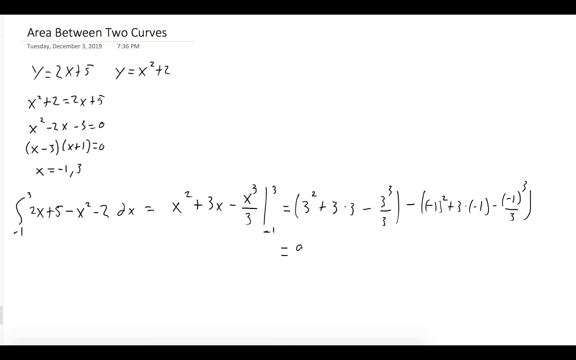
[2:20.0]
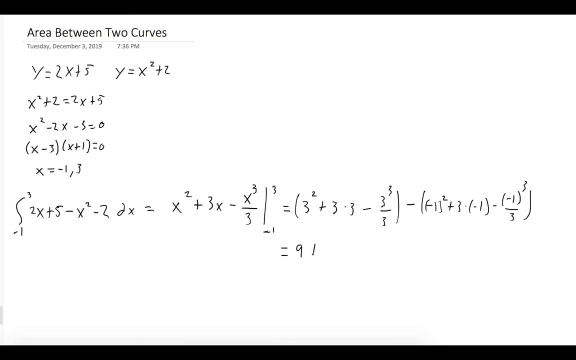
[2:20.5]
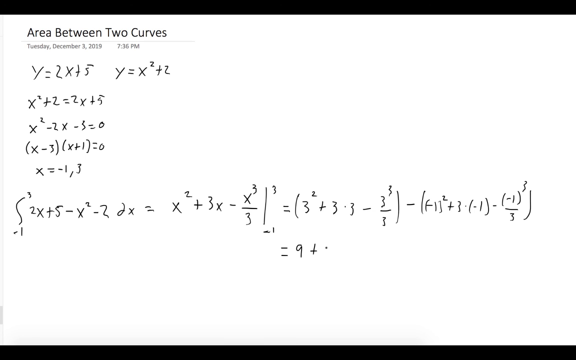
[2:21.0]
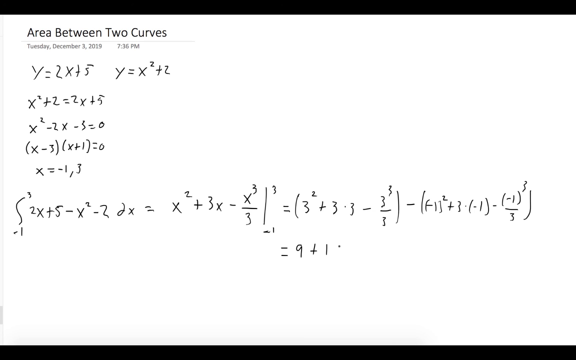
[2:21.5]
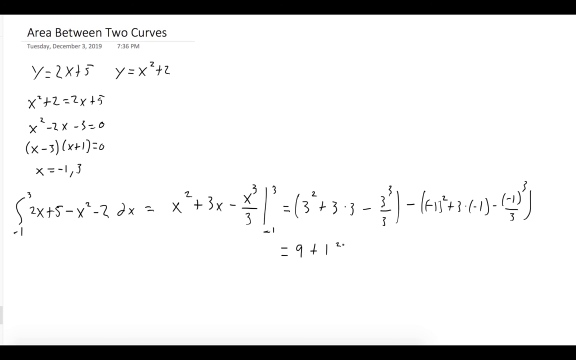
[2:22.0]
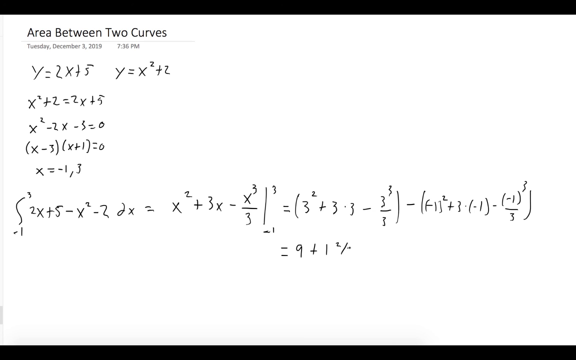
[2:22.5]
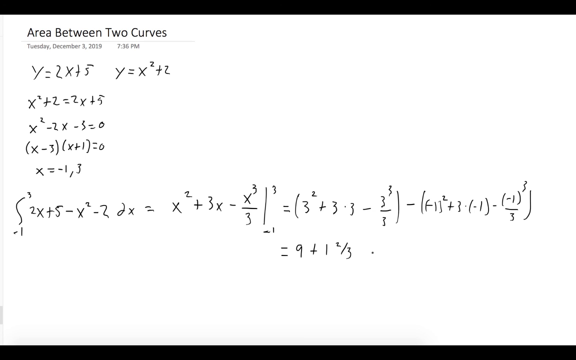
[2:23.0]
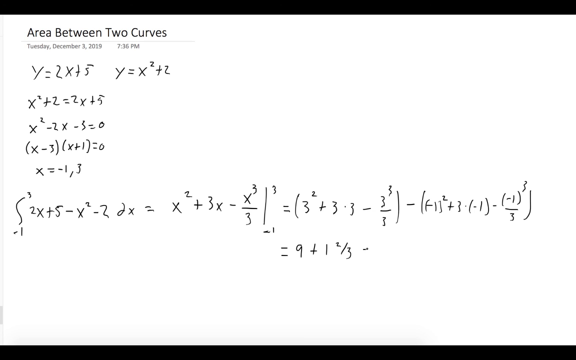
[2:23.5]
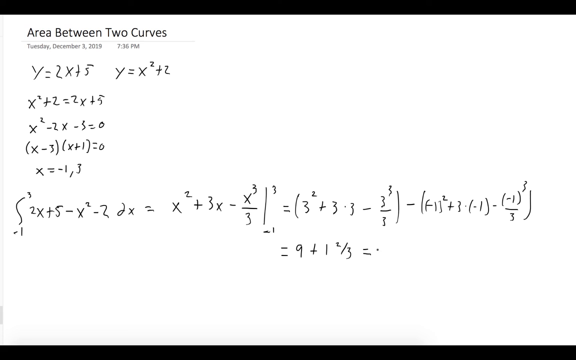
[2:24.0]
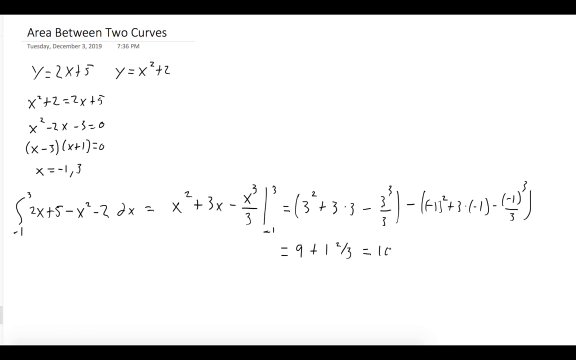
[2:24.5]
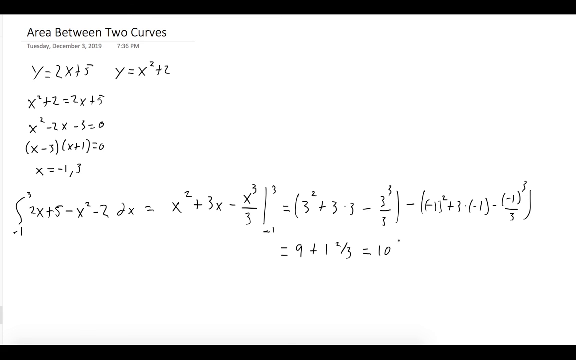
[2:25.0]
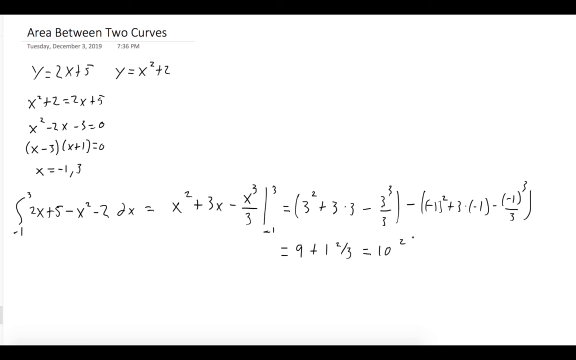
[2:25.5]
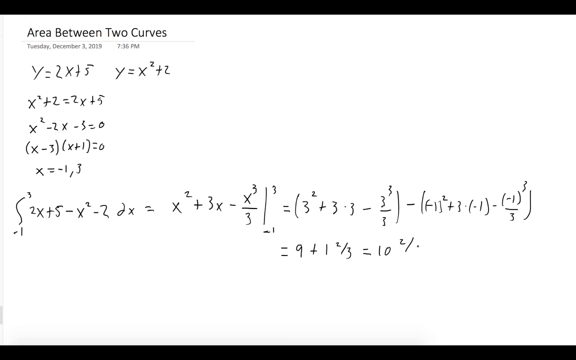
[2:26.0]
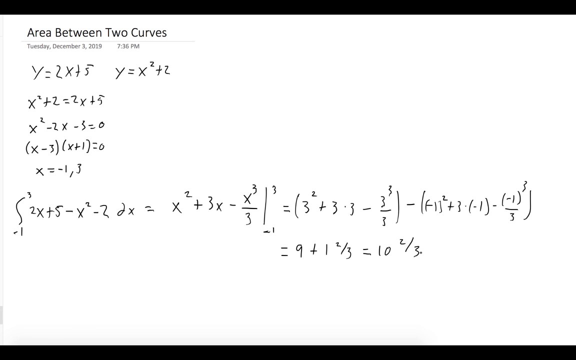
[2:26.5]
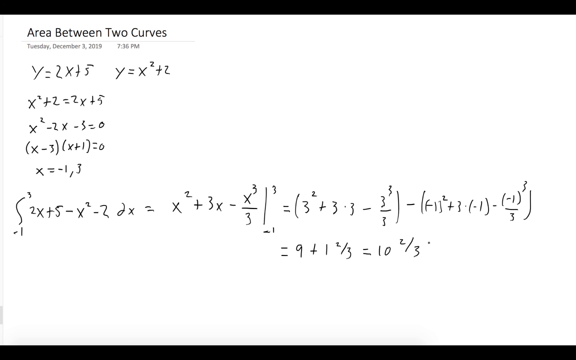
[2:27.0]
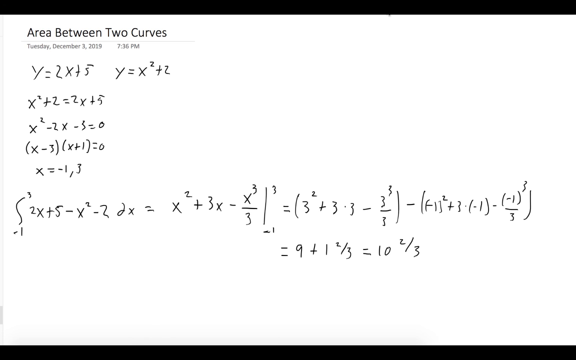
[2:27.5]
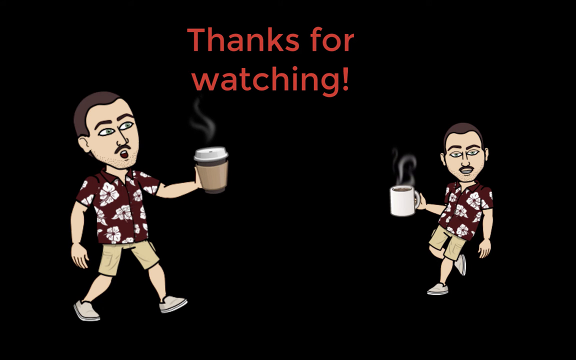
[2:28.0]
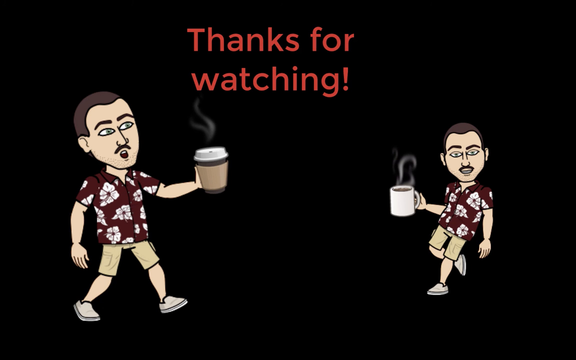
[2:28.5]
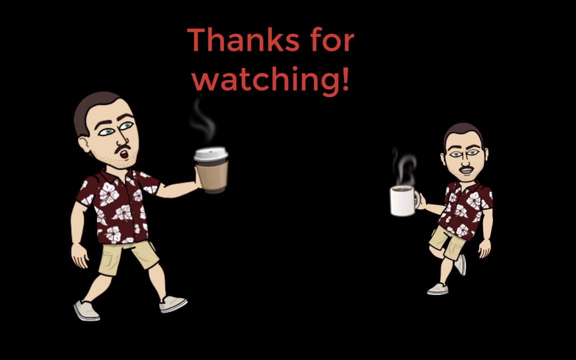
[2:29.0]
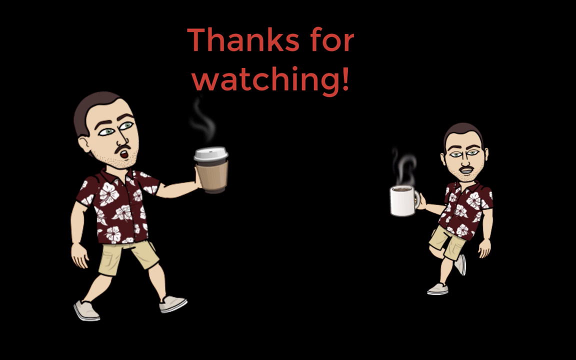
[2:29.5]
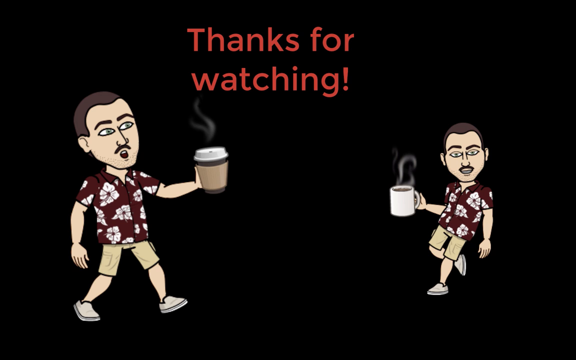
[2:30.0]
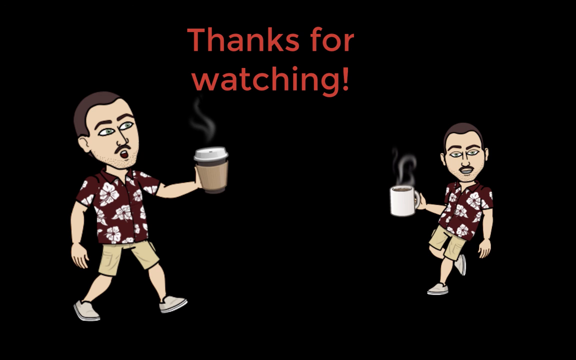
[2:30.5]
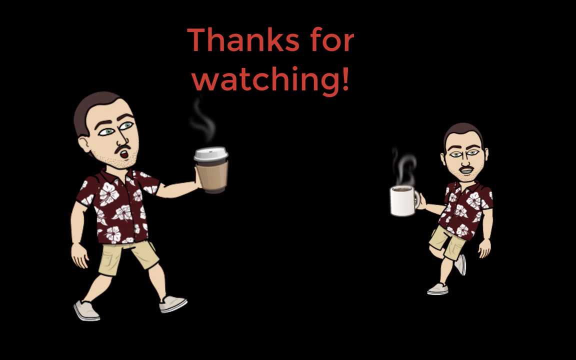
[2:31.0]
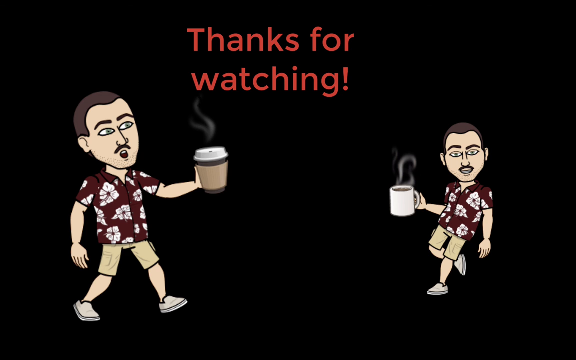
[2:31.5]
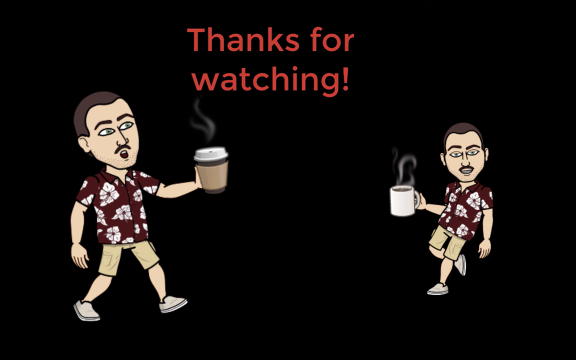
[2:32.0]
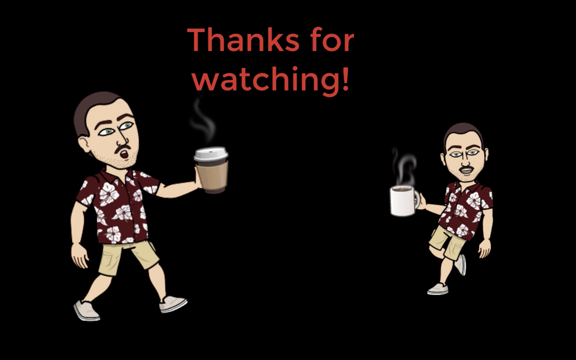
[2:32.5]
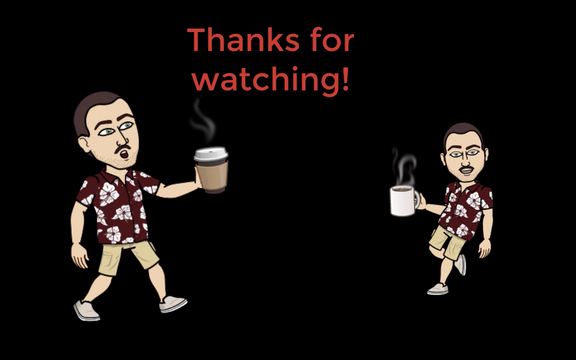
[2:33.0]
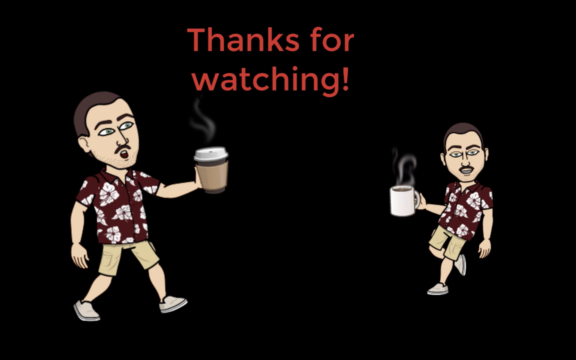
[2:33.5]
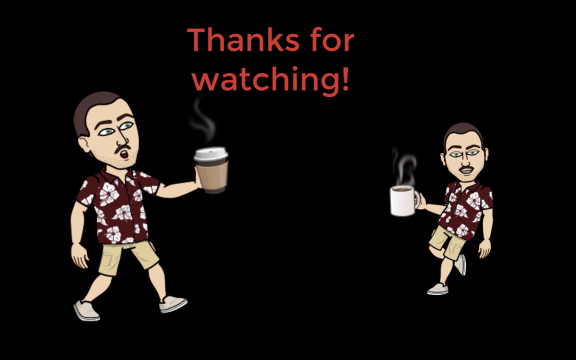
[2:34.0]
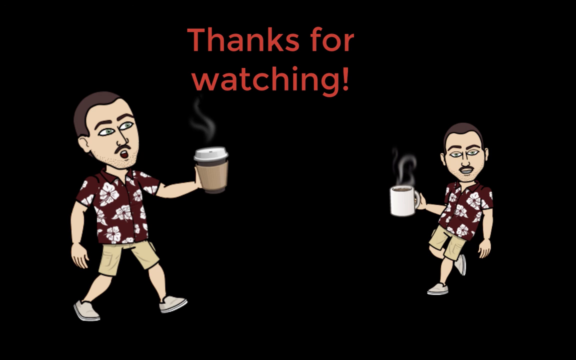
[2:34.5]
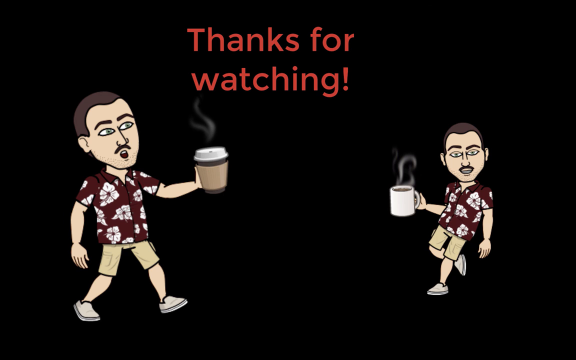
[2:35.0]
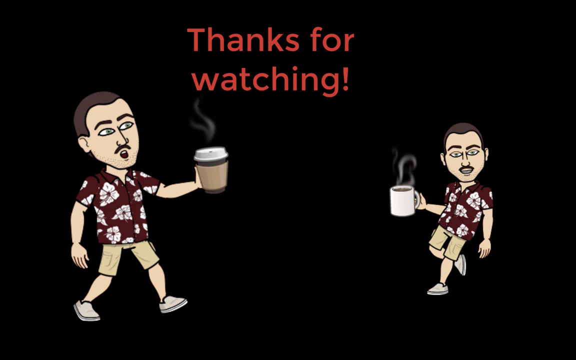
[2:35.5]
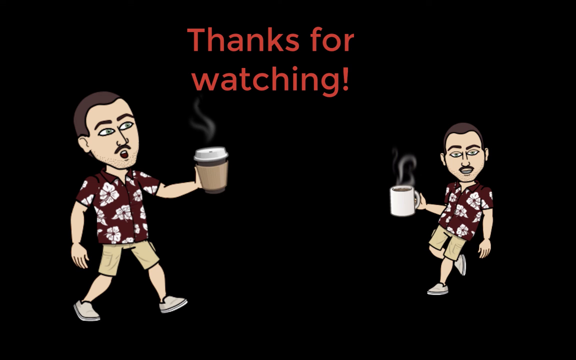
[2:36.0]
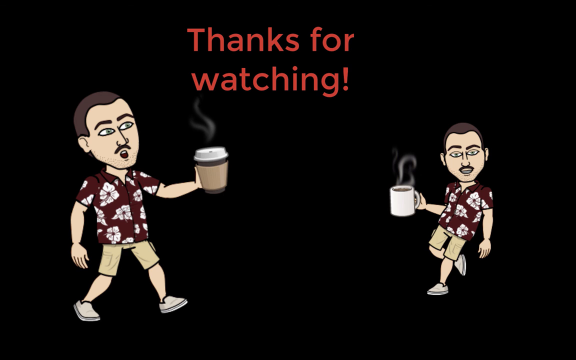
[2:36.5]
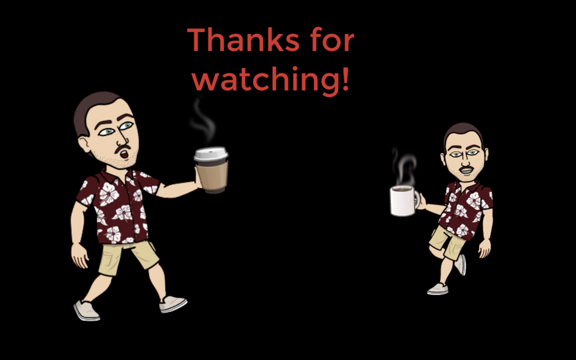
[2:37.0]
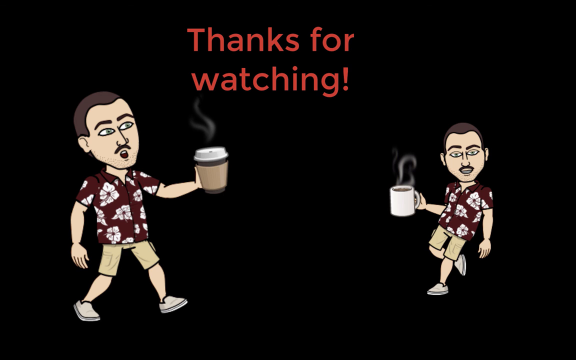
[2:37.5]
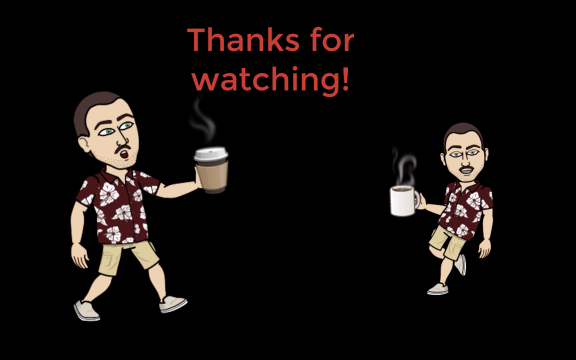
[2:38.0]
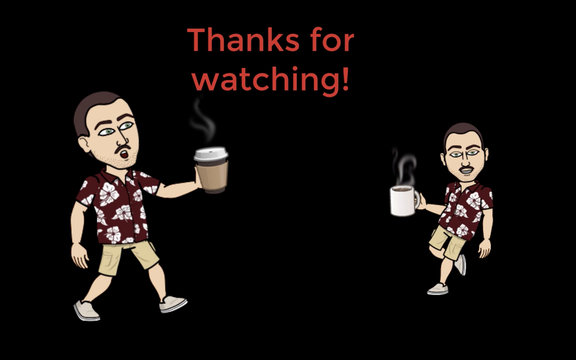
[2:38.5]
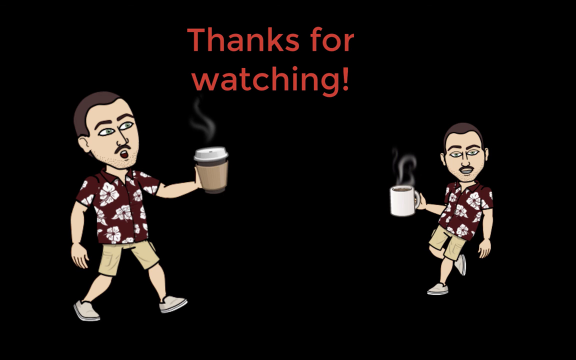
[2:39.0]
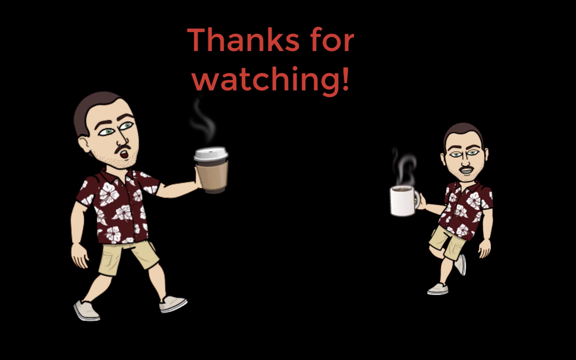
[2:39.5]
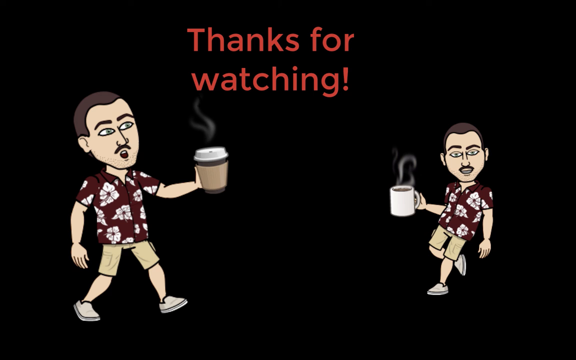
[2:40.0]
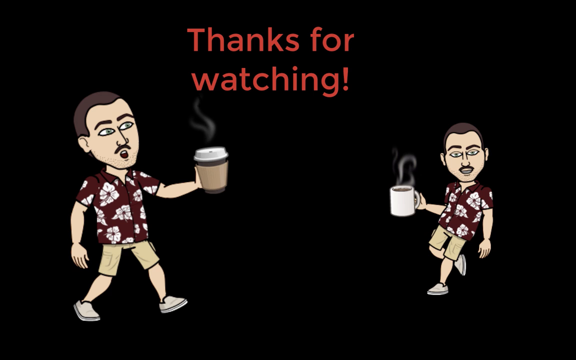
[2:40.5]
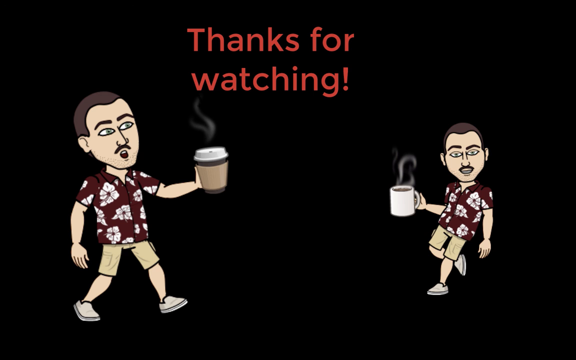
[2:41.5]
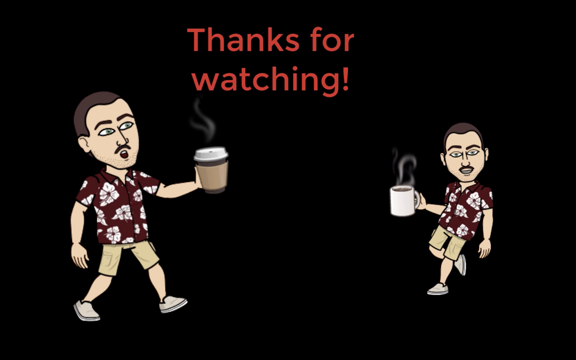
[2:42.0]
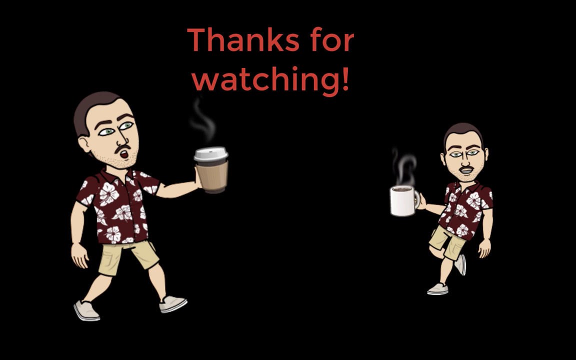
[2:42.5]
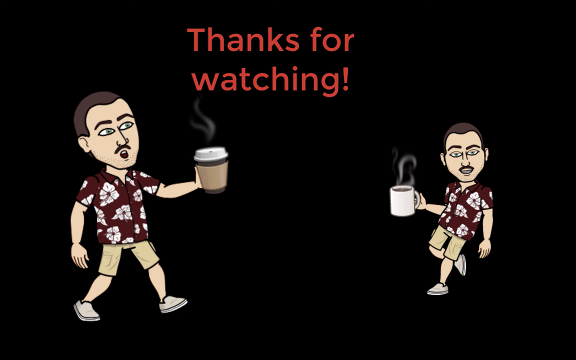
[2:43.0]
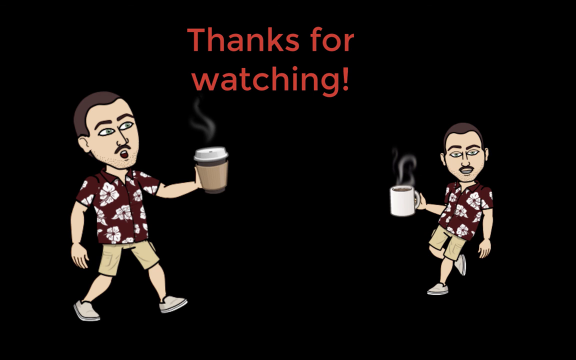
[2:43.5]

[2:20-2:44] The equation ends with "= 9 + 1 2/3" and then "= 10 2/3." At the very end of the video, the two avatars from the beginning, in Hawaiian shirts with their coffees, appear with "thanks for watching."